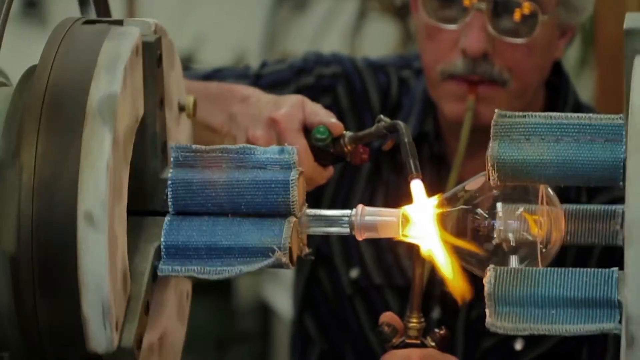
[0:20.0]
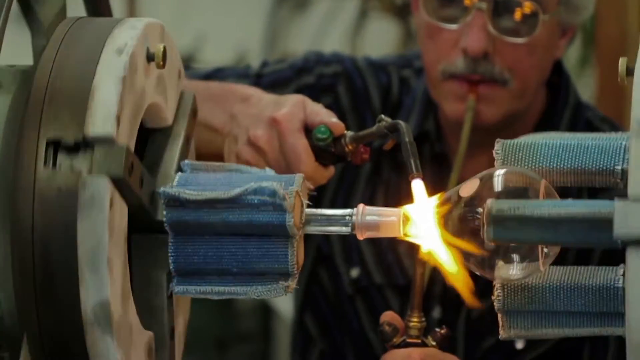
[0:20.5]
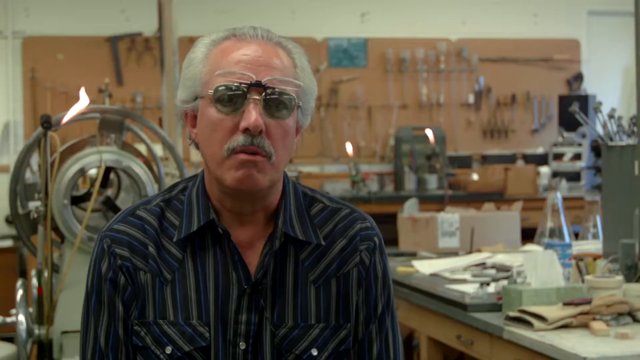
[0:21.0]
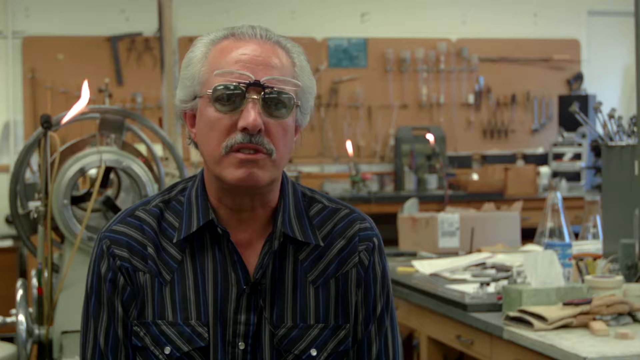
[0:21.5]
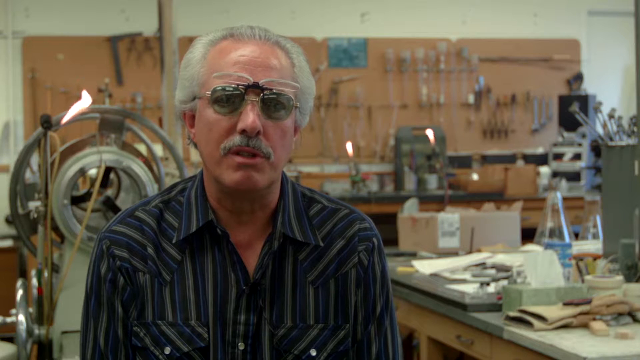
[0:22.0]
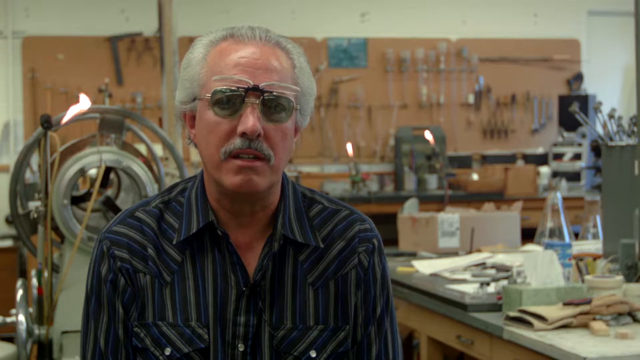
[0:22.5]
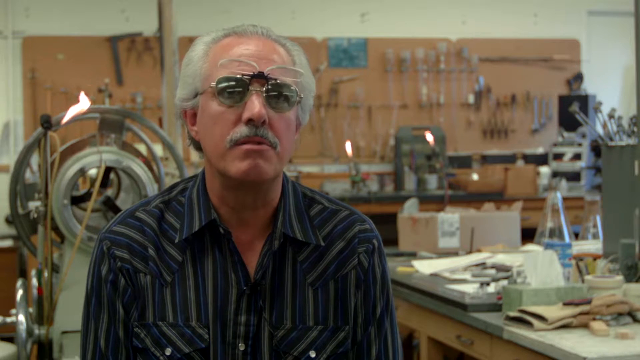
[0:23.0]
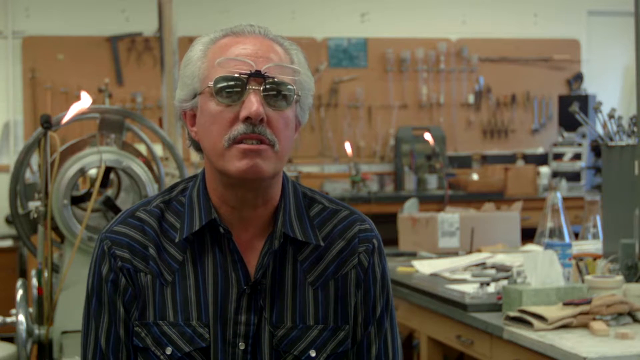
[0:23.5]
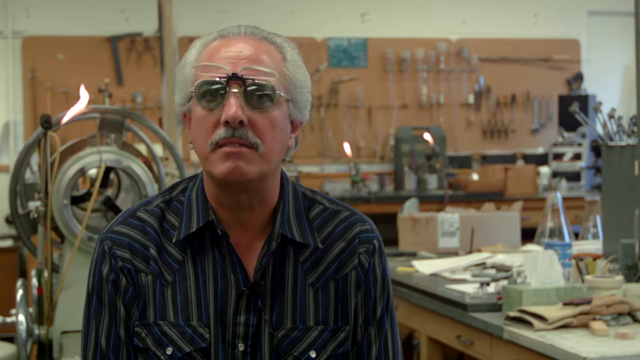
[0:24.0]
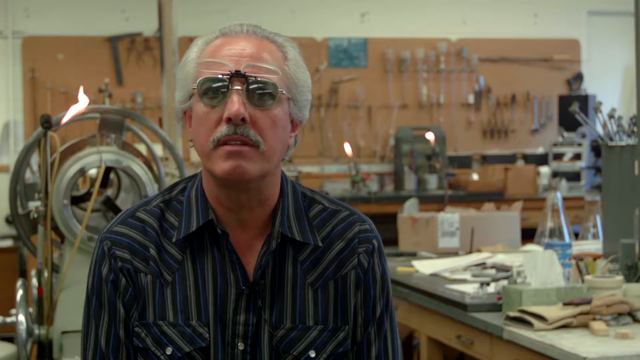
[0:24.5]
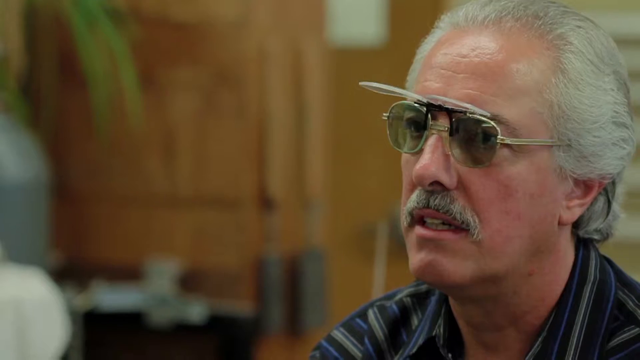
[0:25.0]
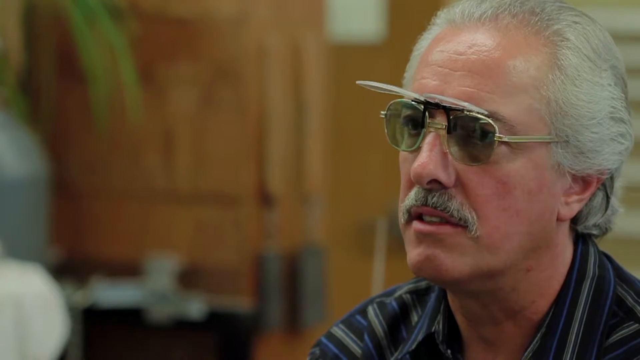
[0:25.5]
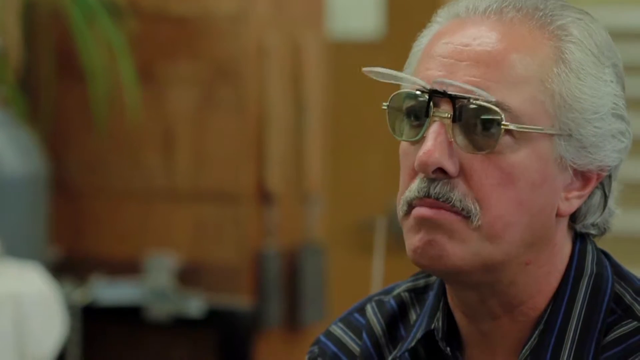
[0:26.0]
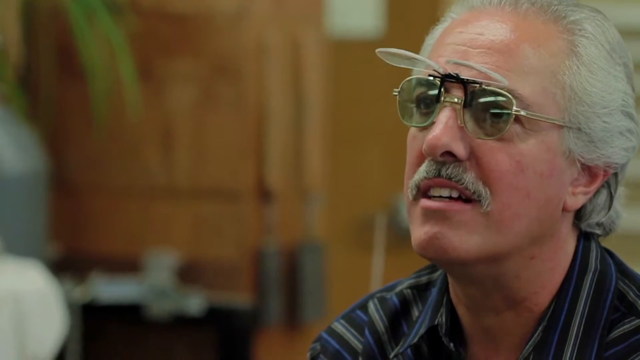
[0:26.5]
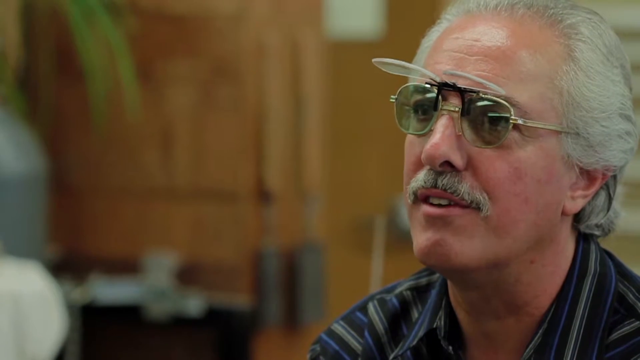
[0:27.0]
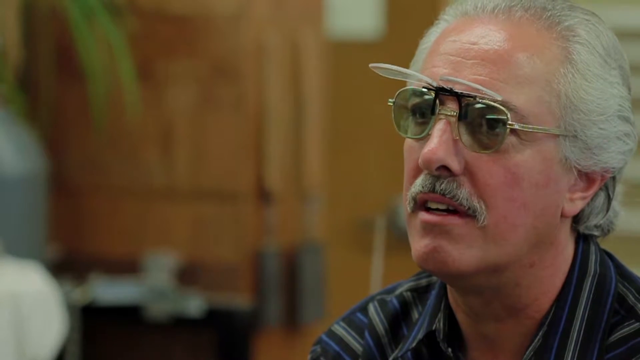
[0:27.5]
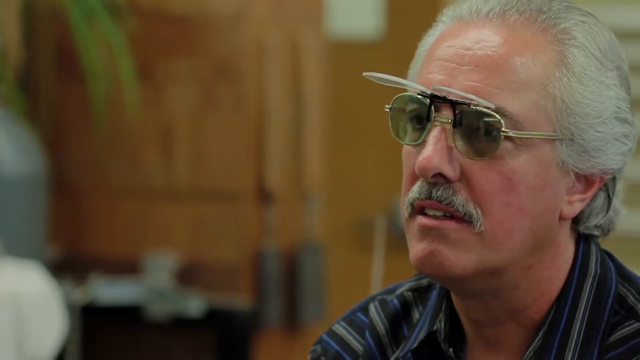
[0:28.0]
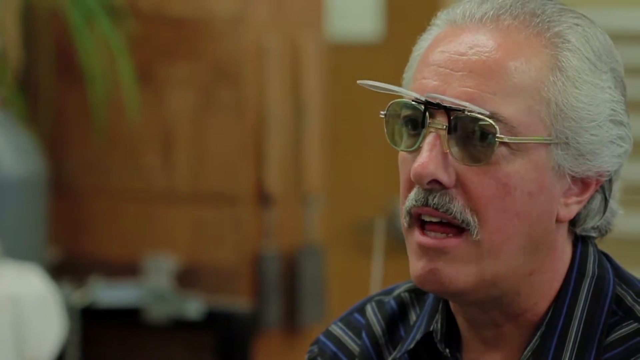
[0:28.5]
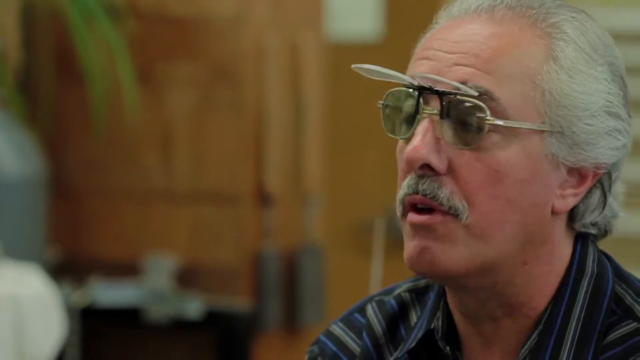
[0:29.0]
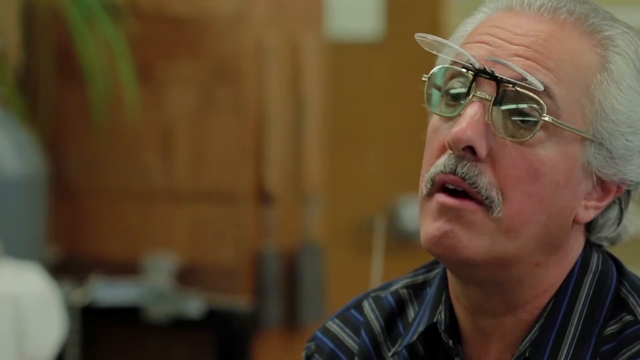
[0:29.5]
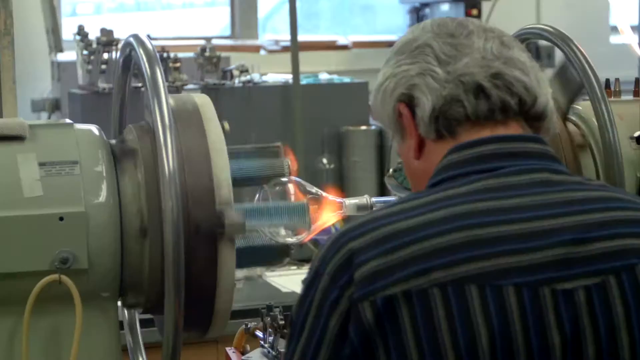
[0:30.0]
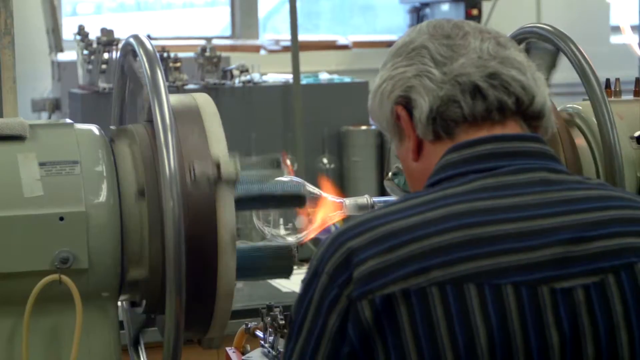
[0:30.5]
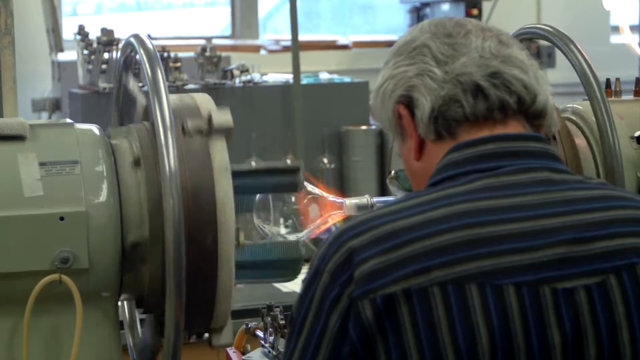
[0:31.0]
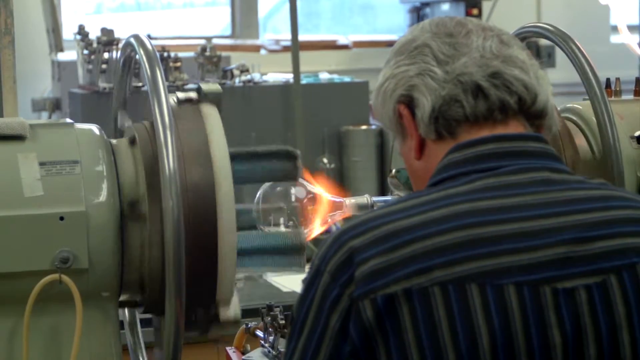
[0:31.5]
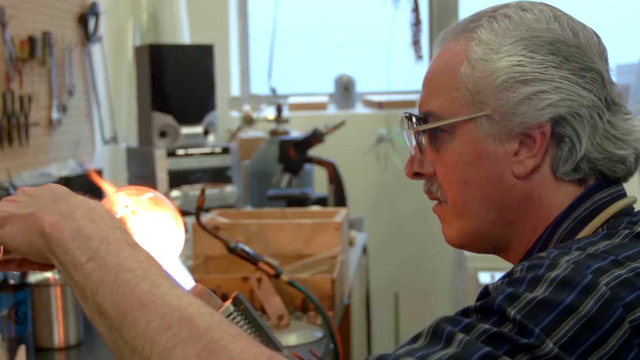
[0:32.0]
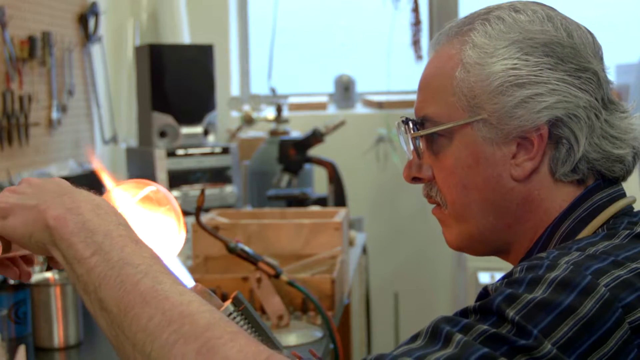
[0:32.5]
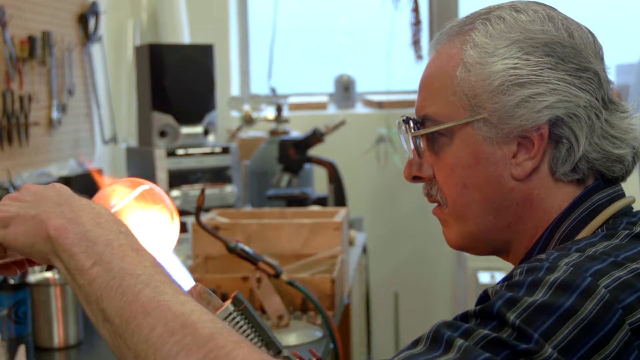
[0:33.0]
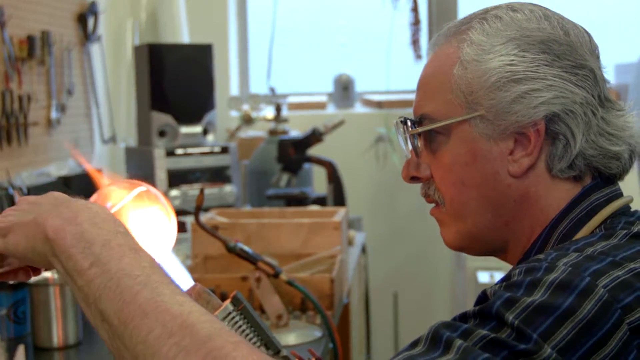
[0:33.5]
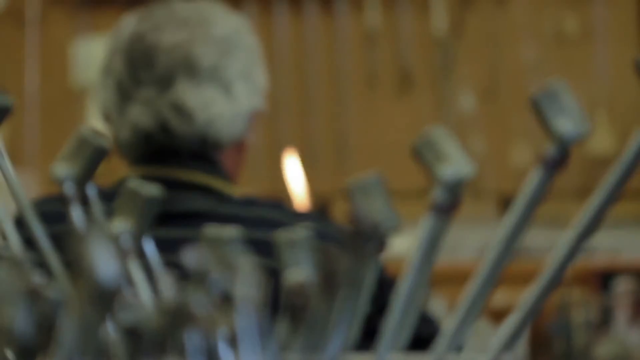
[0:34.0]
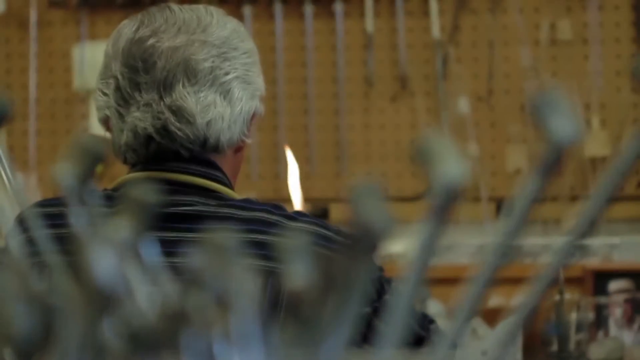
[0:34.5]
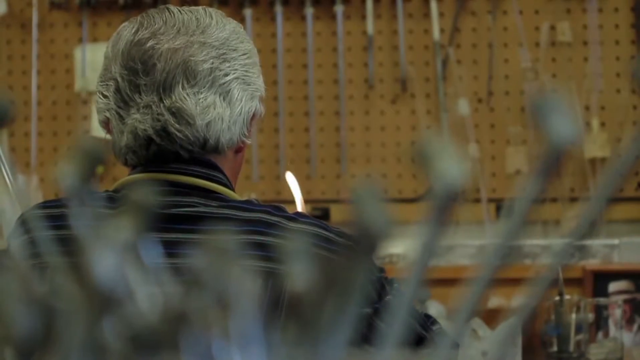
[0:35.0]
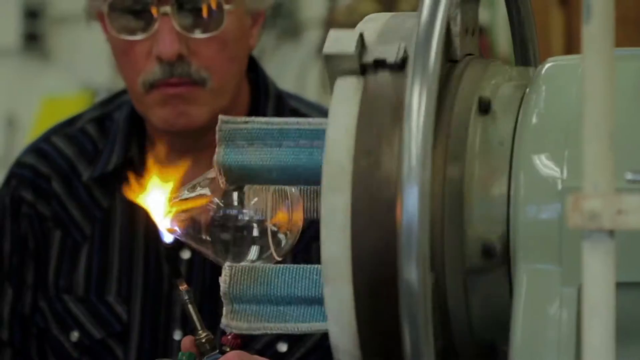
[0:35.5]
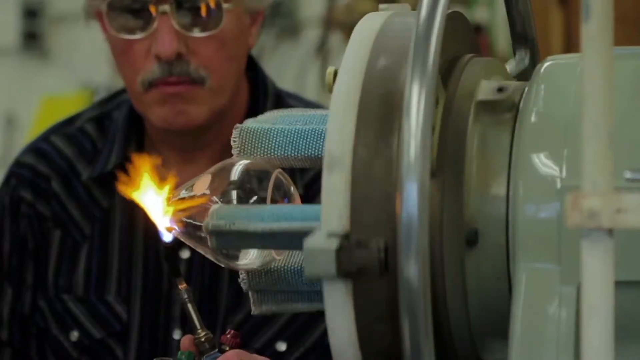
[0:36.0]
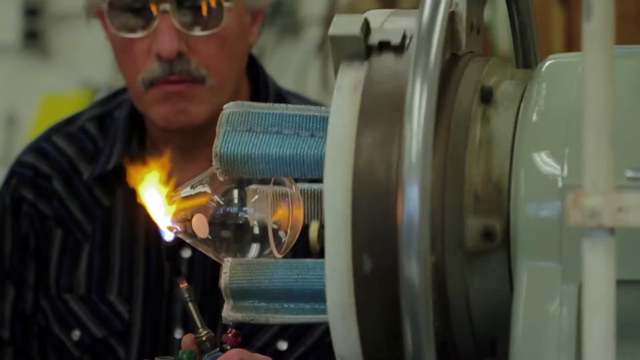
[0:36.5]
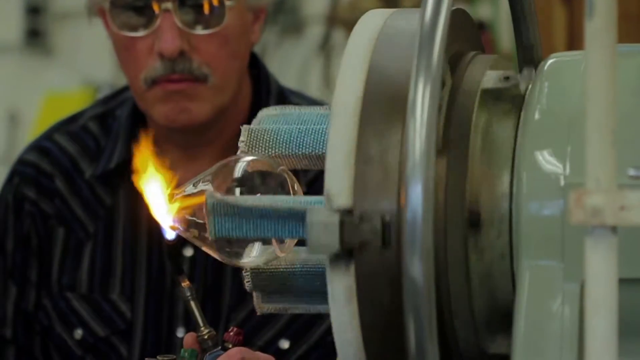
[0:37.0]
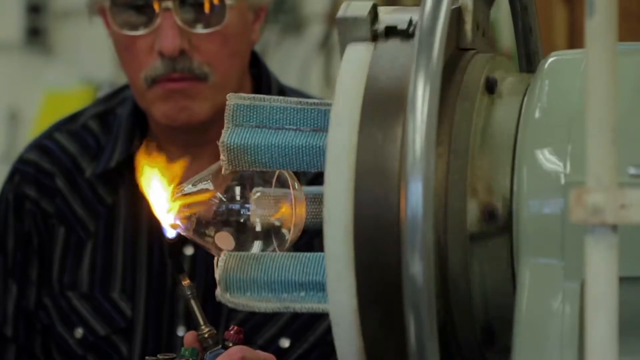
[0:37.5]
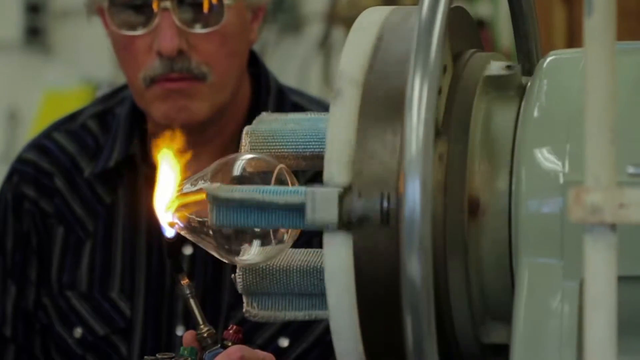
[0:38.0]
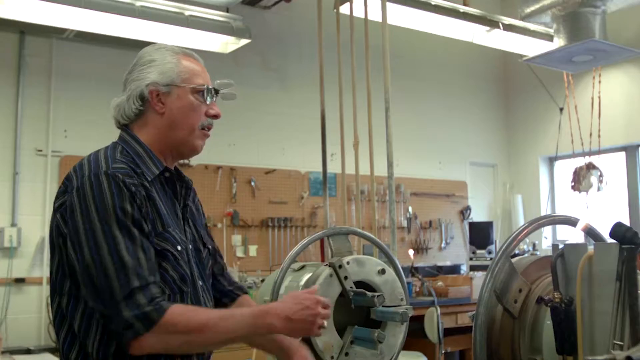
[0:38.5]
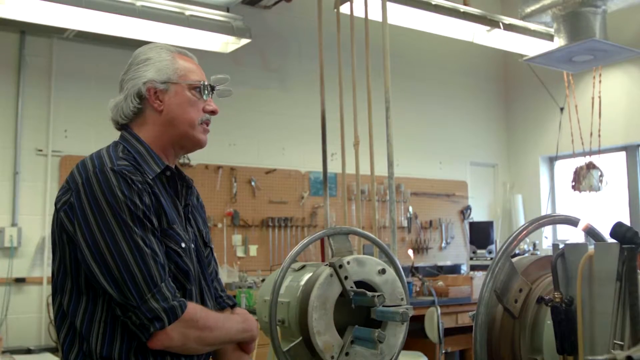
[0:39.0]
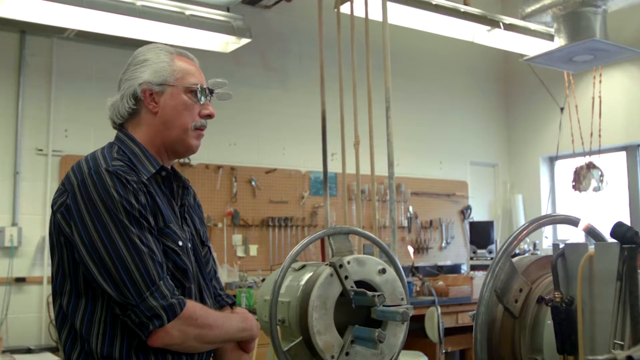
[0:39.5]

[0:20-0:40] Three fires are burning behind him as he talks while facing the camera. He is a white man and is wearing scientific glasses. He also talks while facing the other side of the camera. He sits on a chair, and on the desk two machines are spinning a piece of glass; he keeps burning it as he moulds it into the shape he wants.